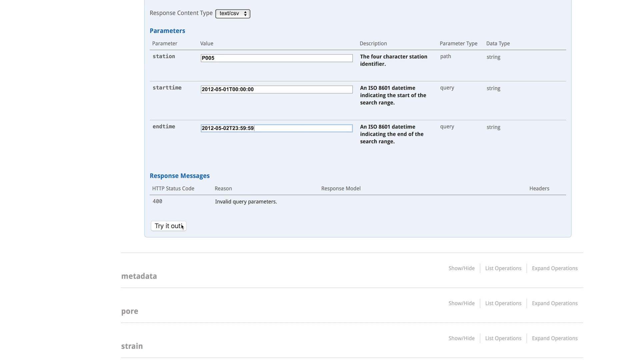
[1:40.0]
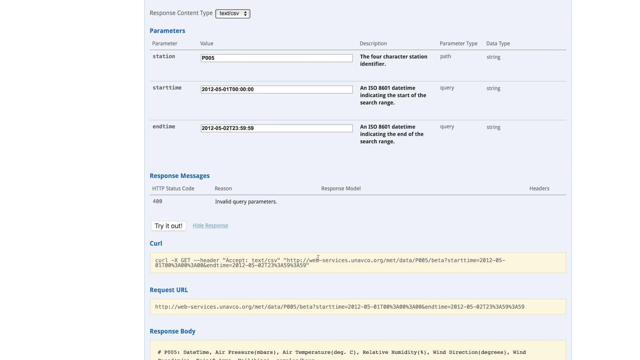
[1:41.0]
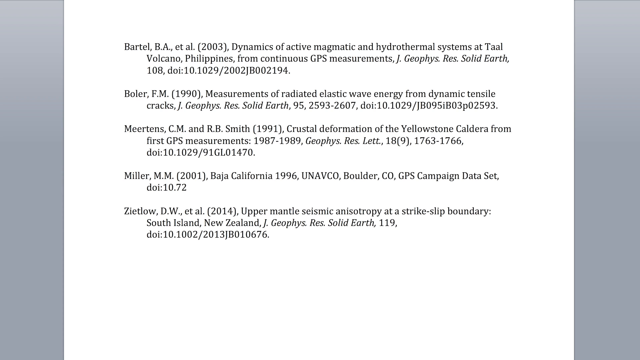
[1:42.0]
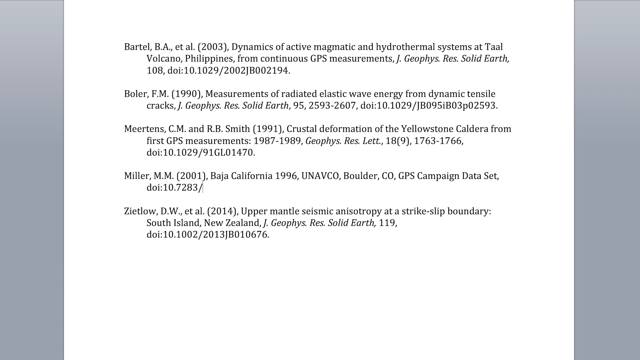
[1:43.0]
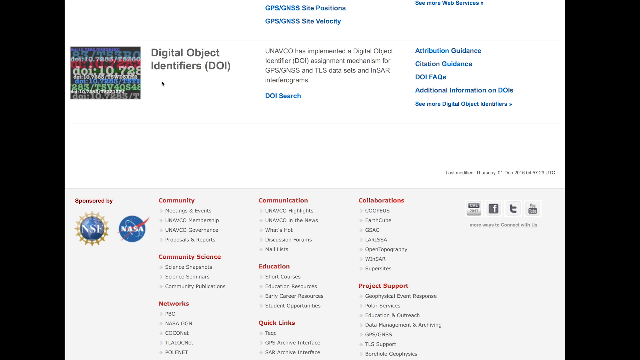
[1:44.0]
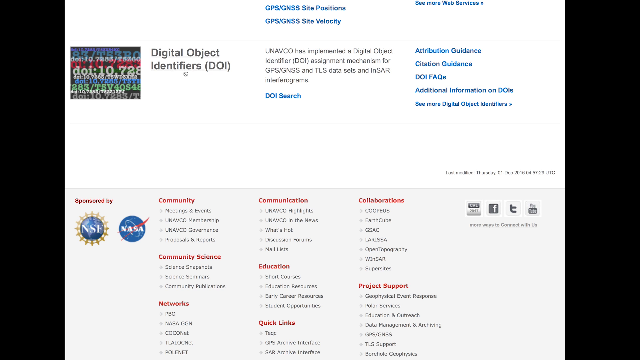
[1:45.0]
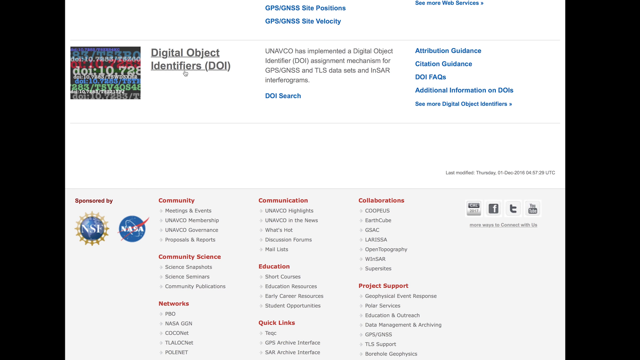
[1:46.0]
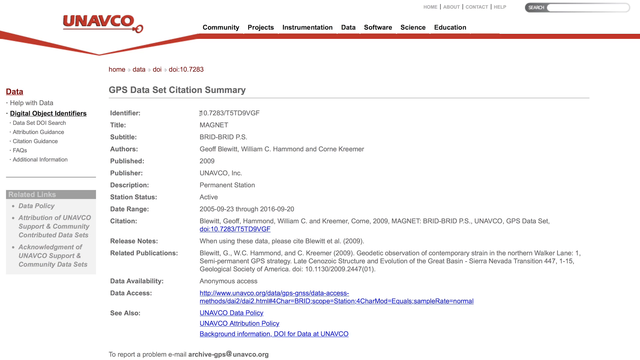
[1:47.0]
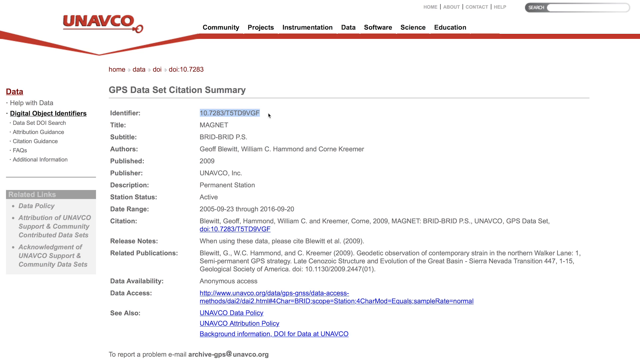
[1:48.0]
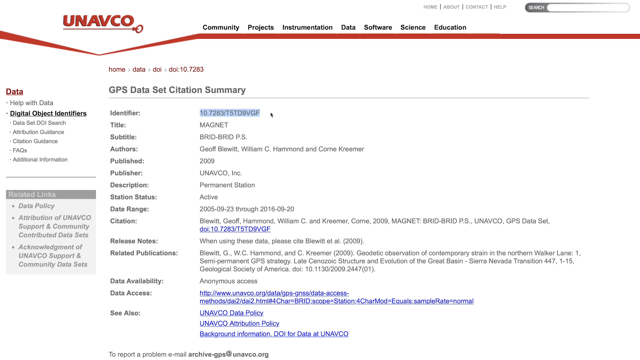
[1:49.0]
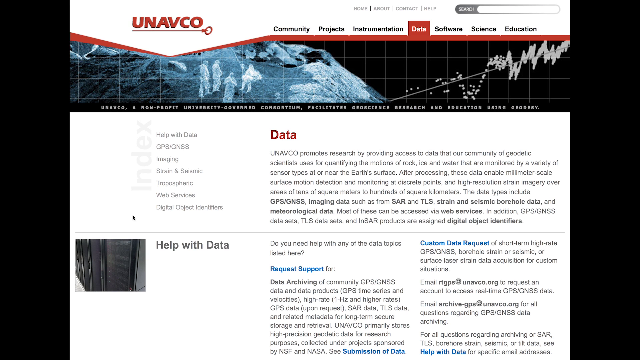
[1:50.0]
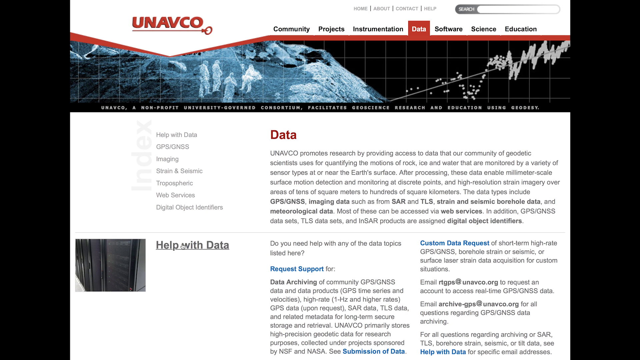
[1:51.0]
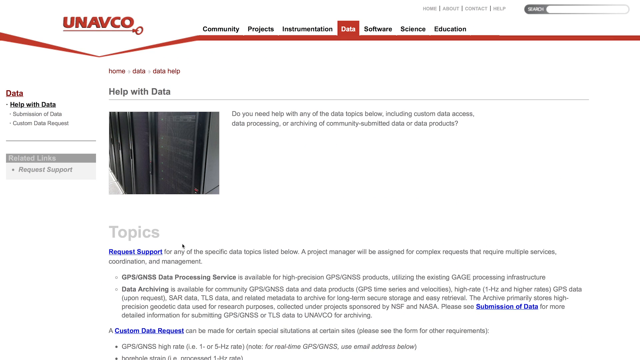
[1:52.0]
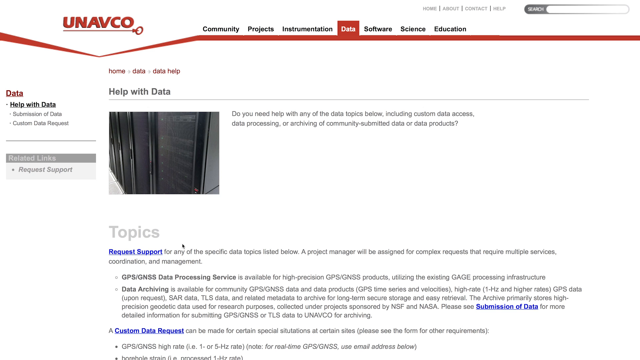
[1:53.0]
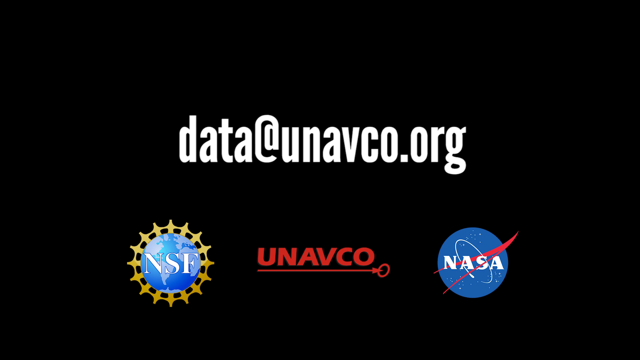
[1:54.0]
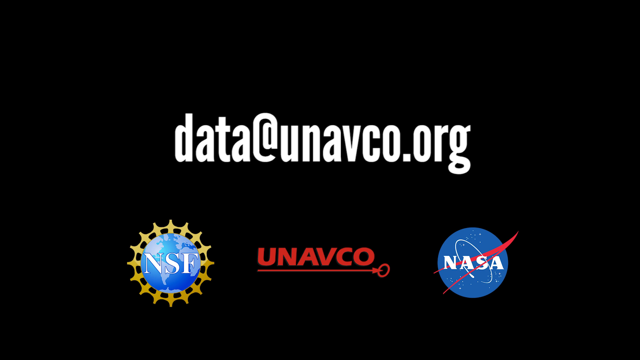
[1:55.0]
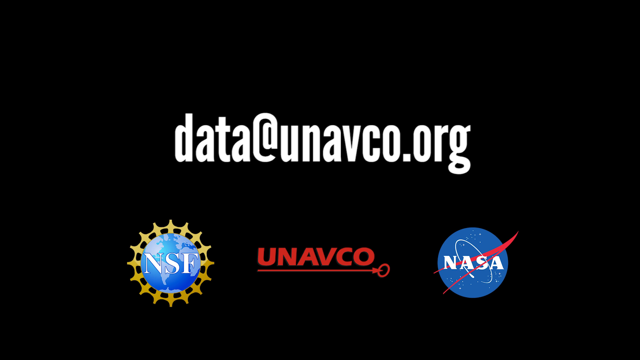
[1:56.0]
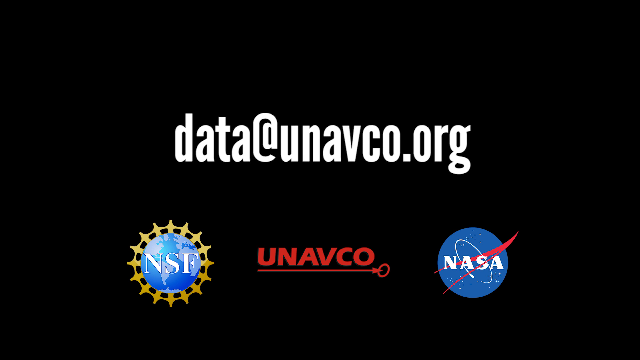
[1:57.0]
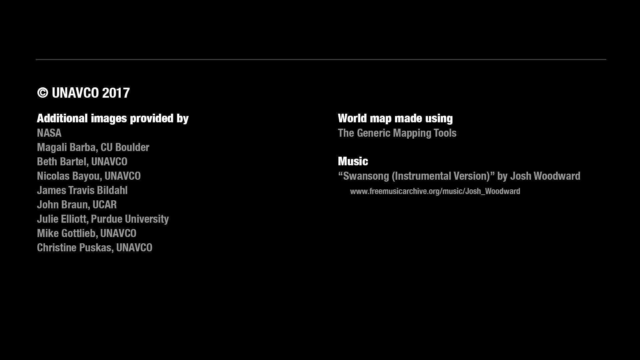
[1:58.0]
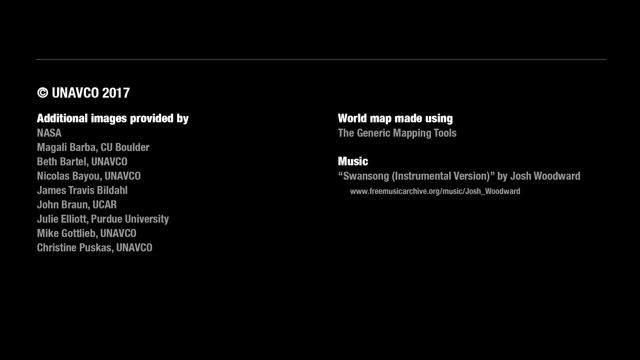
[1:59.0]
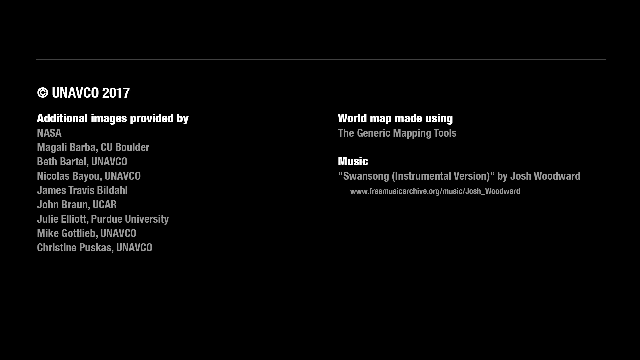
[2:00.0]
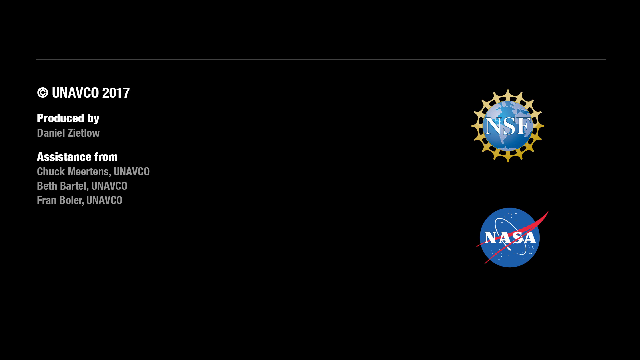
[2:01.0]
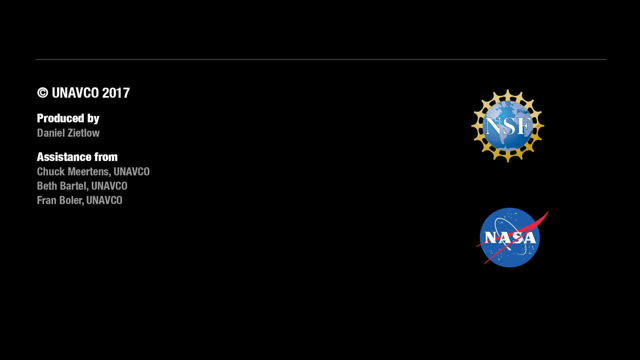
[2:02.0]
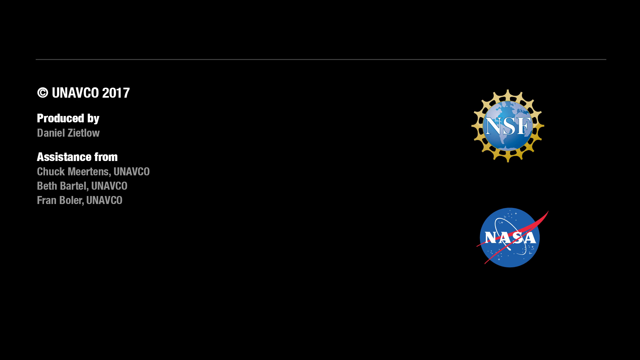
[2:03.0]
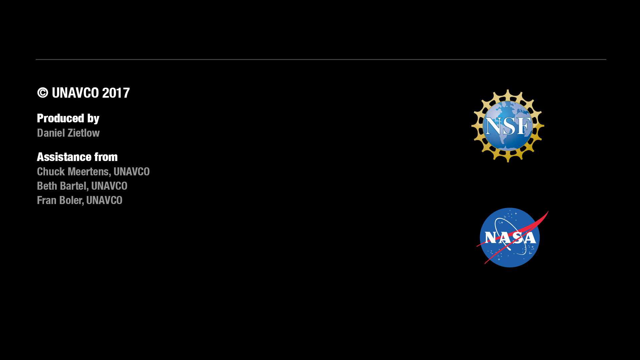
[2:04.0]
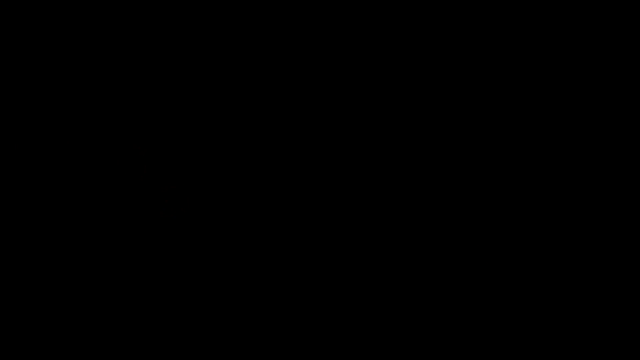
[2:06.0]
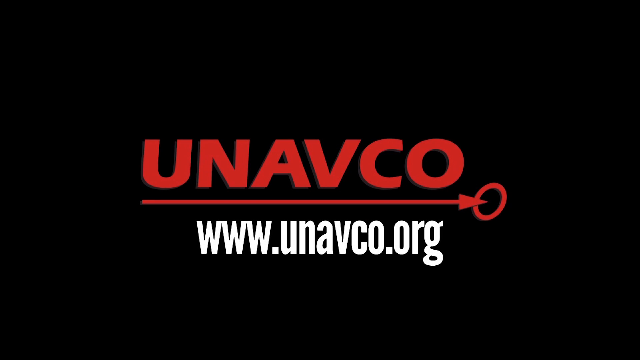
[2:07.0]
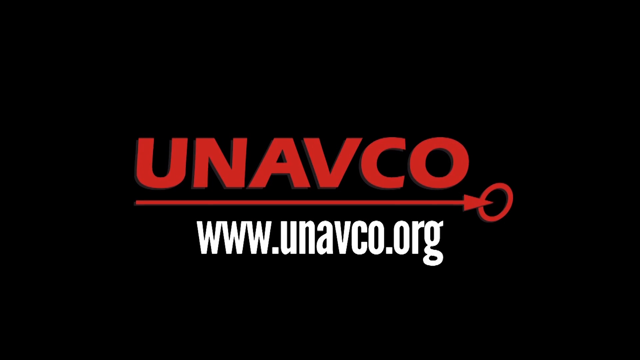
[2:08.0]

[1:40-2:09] The UNIVACO website shows a response content type section listing different response content types. Under the data tab are strain and seismic, laser strainometer data, borehole strainometer data, and other types of data.